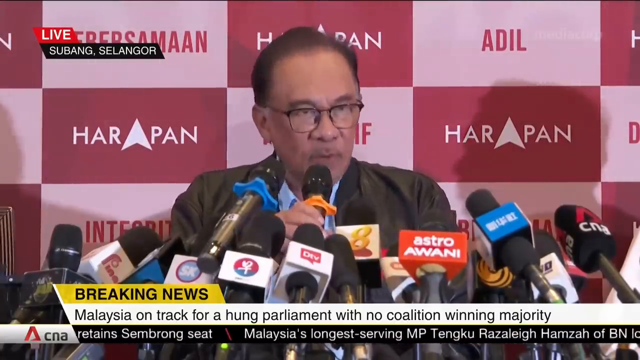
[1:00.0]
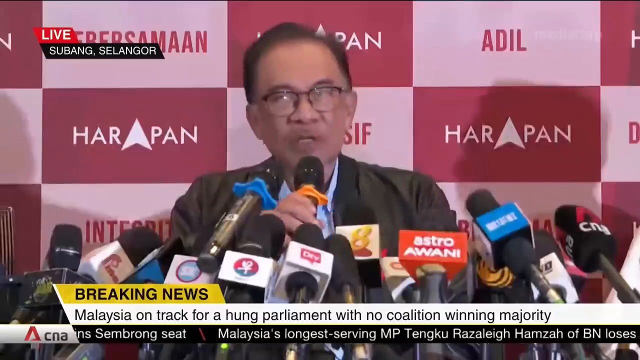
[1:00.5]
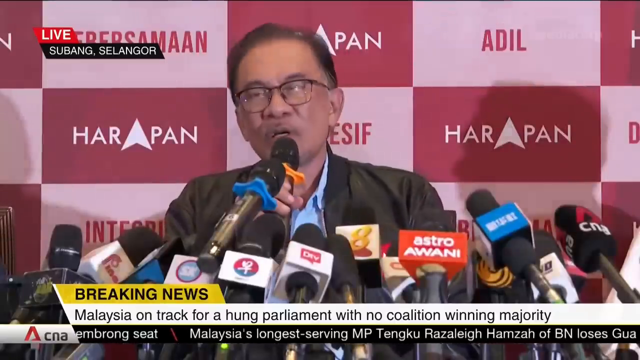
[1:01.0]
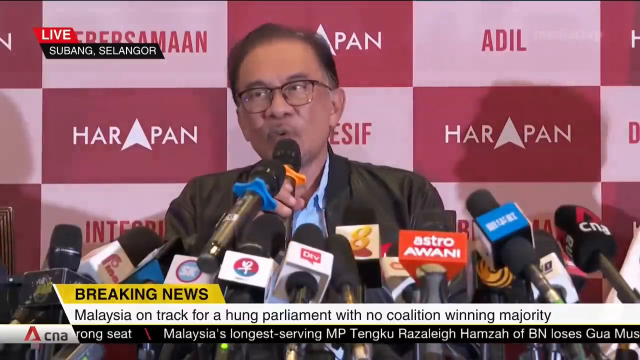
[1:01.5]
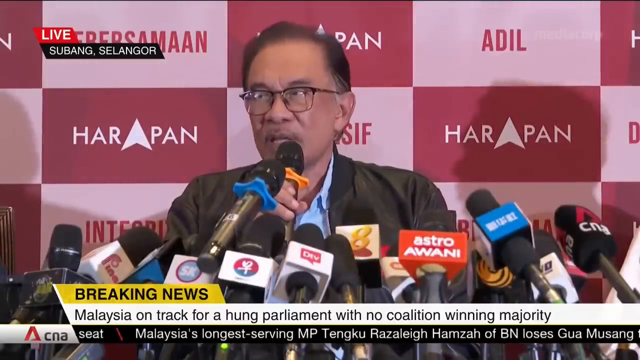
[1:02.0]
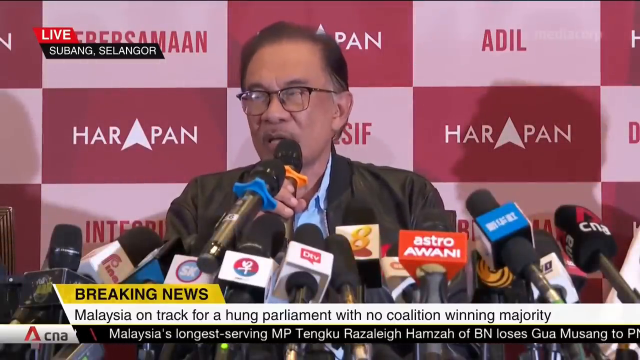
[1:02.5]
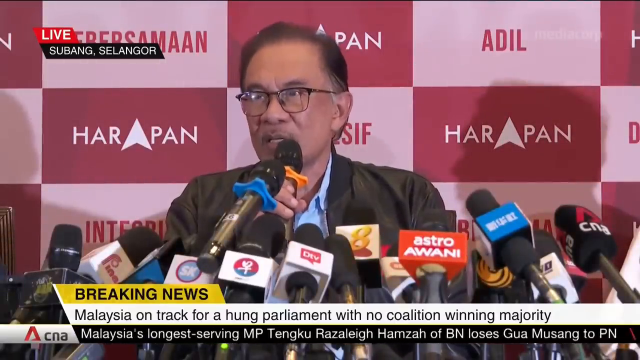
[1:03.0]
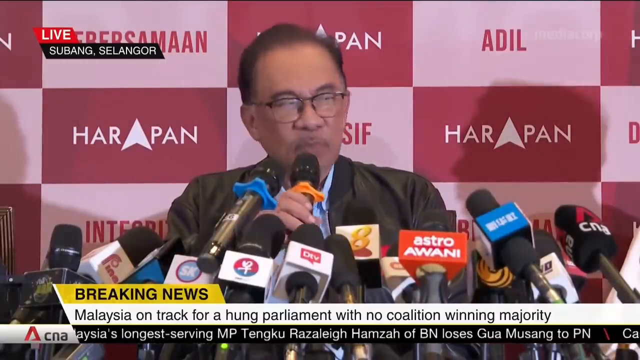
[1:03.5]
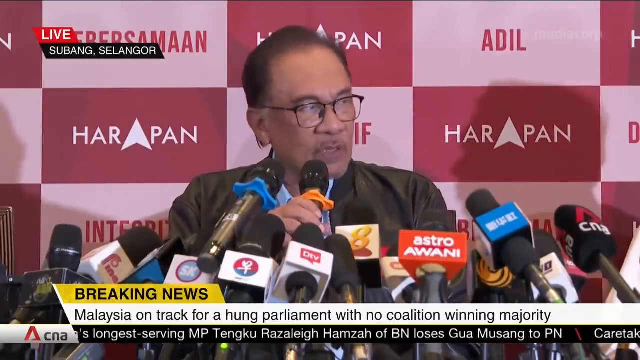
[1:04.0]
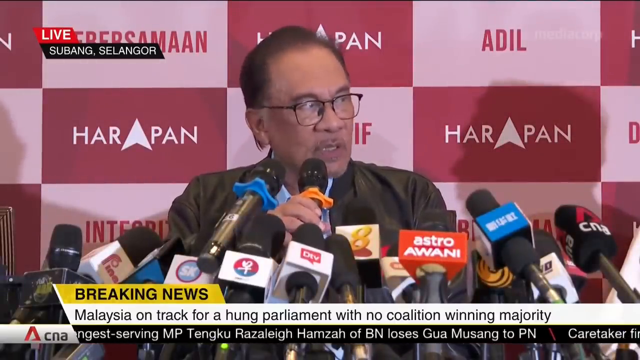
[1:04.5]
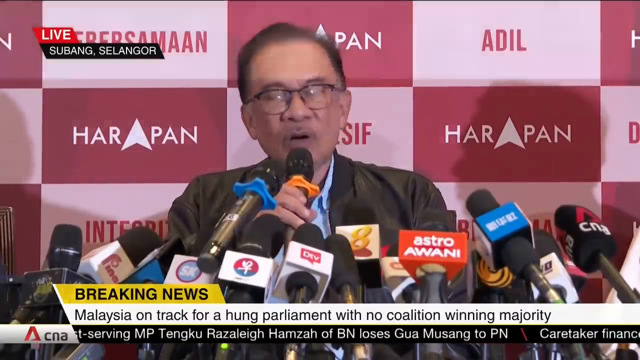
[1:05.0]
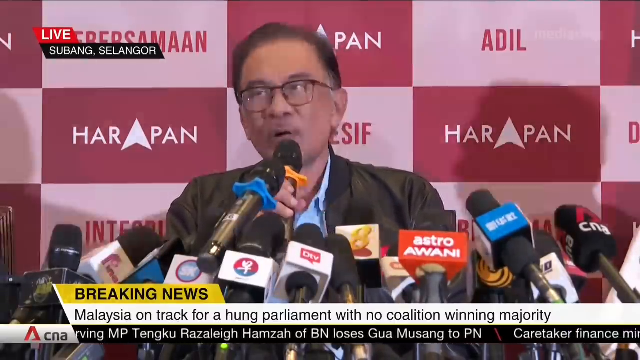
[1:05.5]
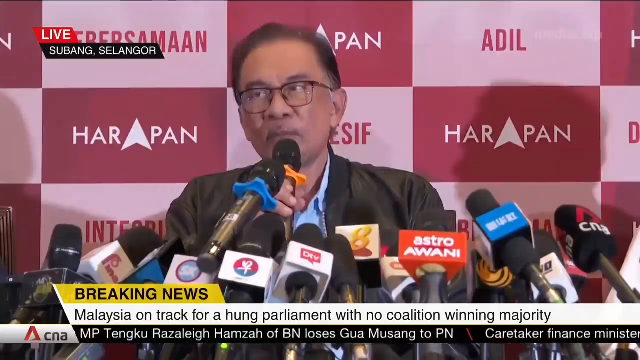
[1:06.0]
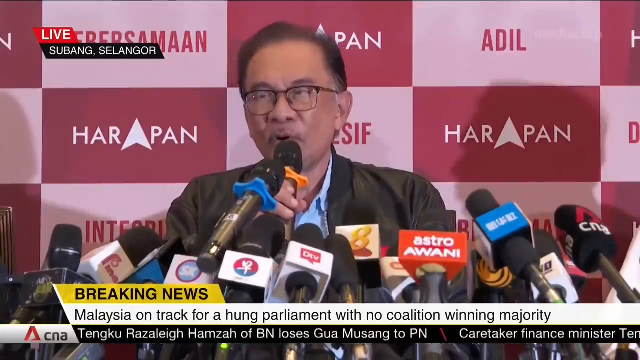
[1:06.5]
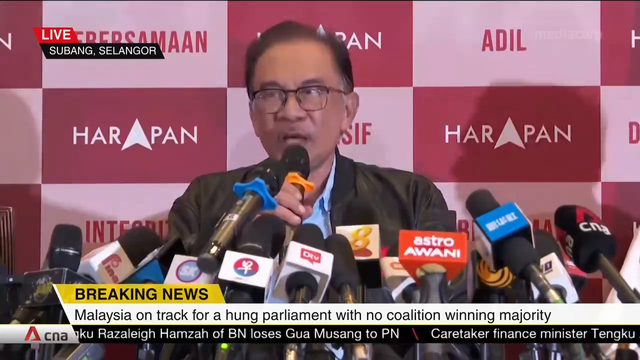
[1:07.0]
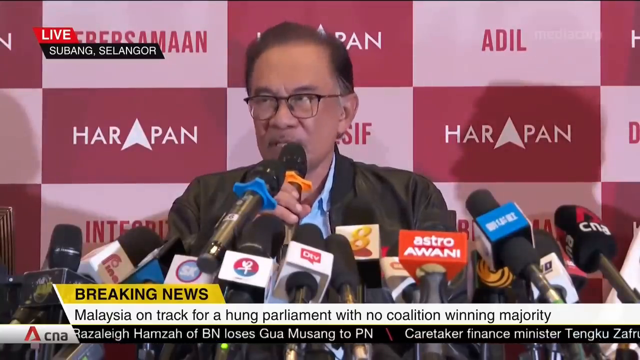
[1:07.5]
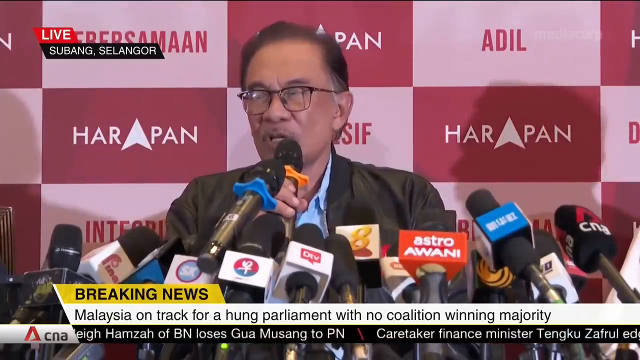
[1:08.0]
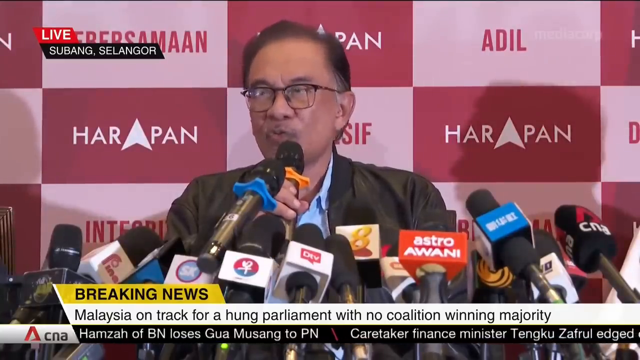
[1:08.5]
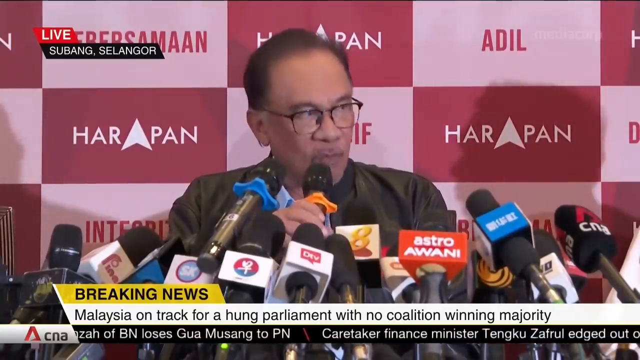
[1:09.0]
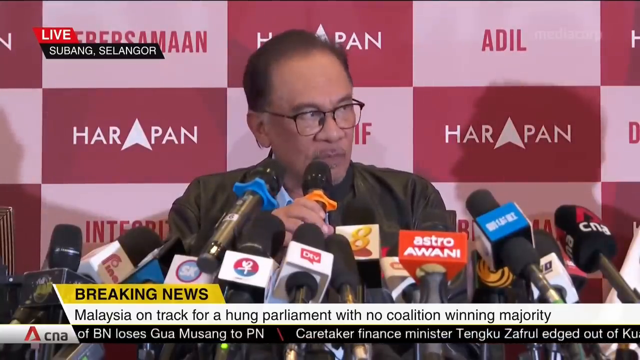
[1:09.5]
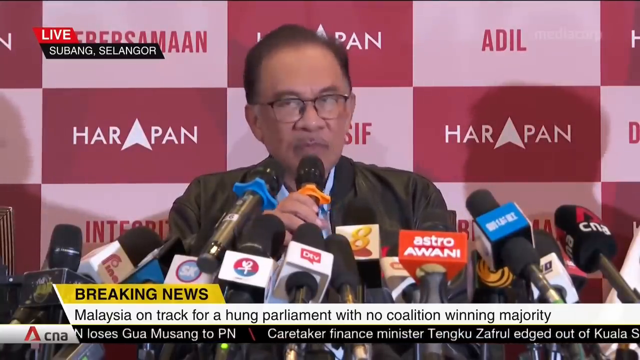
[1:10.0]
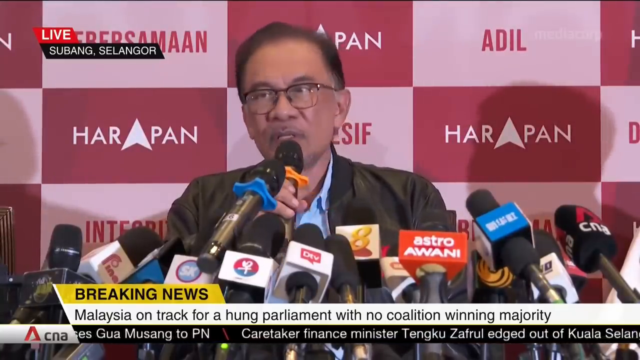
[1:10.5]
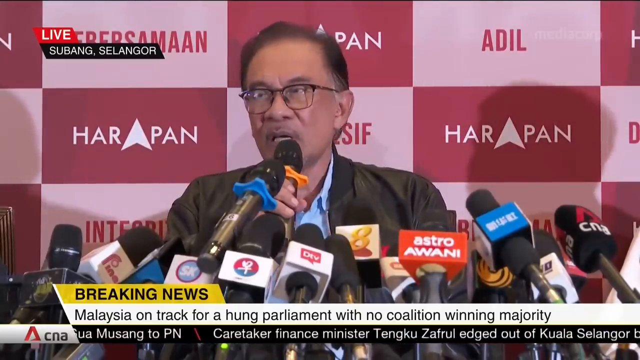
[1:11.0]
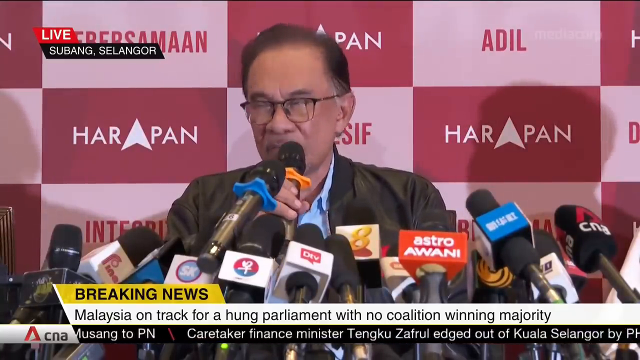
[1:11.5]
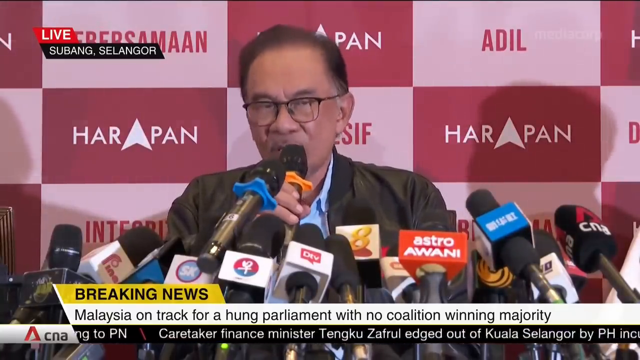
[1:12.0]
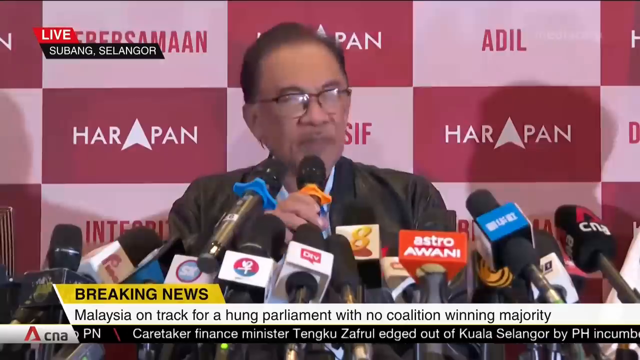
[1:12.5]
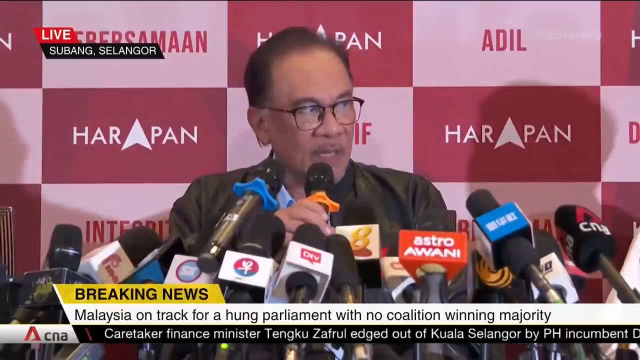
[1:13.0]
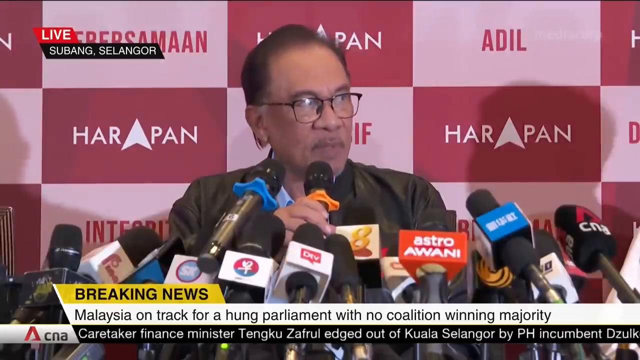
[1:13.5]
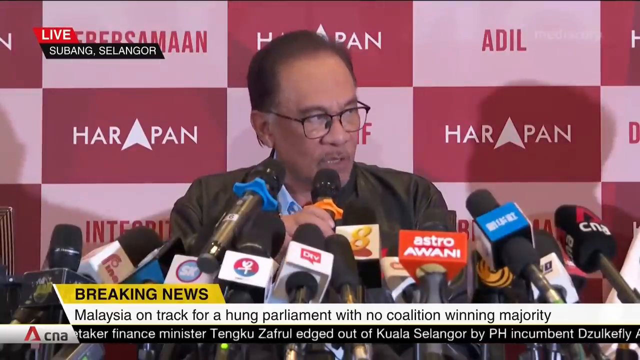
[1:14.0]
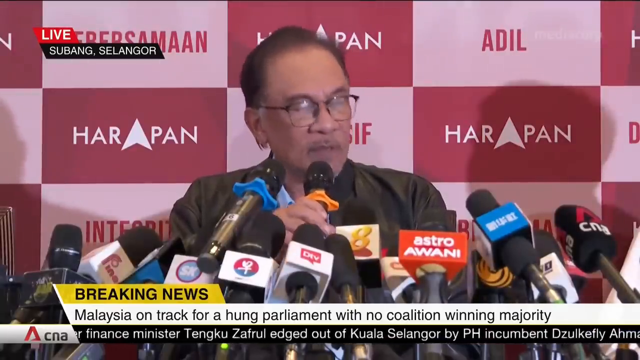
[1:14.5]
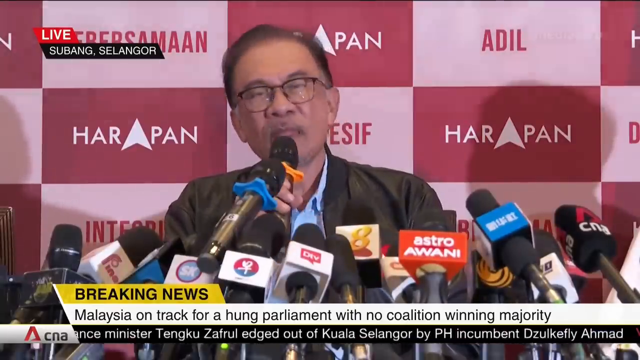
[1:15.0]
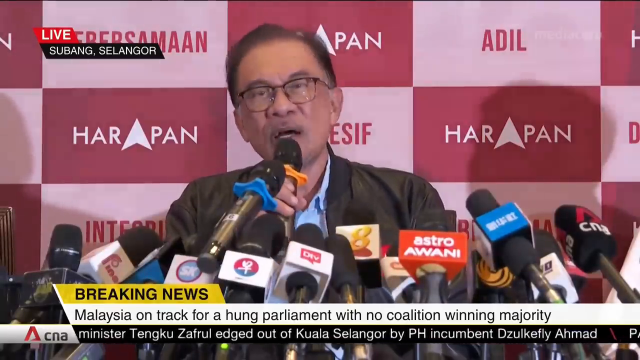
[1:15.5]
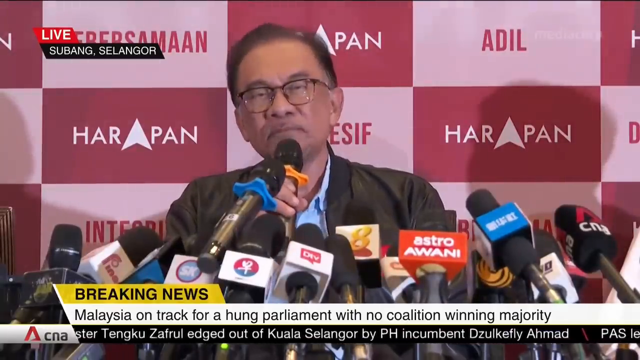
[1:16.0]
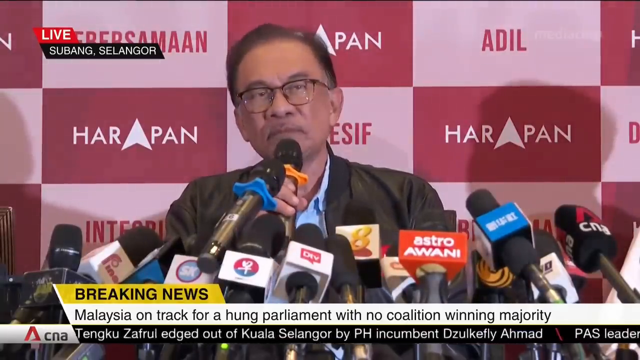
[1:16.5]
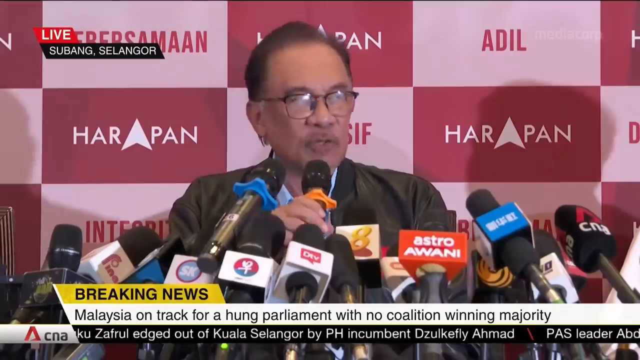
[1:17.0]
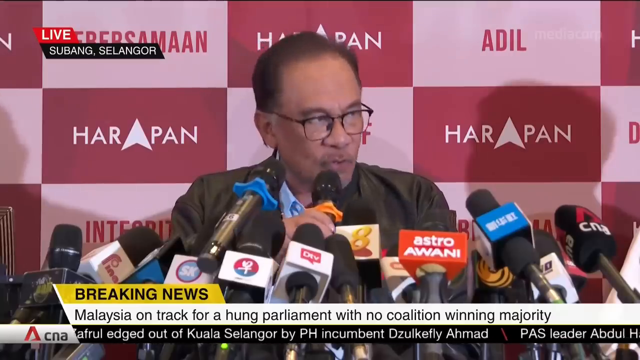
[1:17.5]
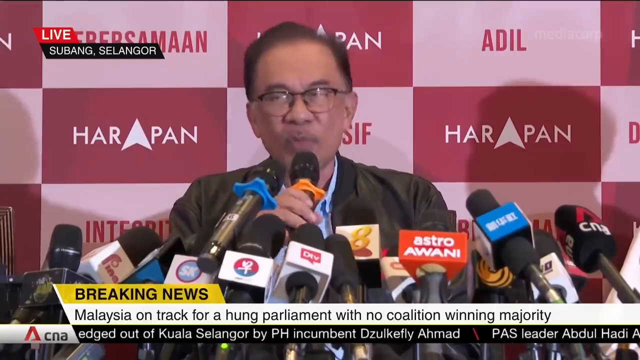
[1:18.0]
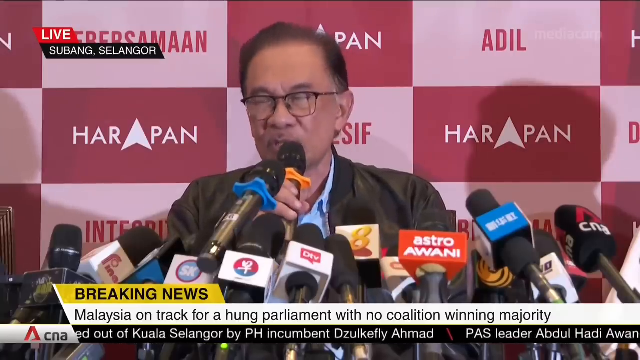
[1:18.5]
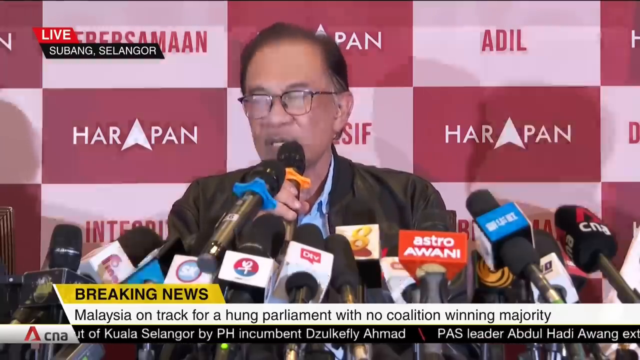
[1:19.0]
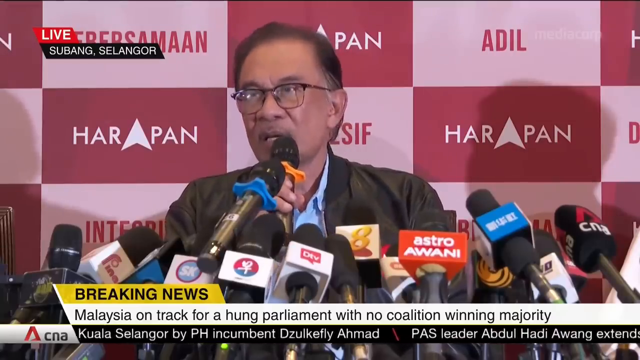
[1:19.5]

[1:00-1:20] Live breaking news coverage from Subang Selangor, Malaysia, shows a banner at the bottom reading "Malaysia on track for a hung parliament with no coalition winning majority," with various news items scrolling along the bottom. A gentleman with glasses speaks toward the camera in front of a dozen or so microphones from different newscasters. The broadcast is from CNA, whose logo is a red triangle.